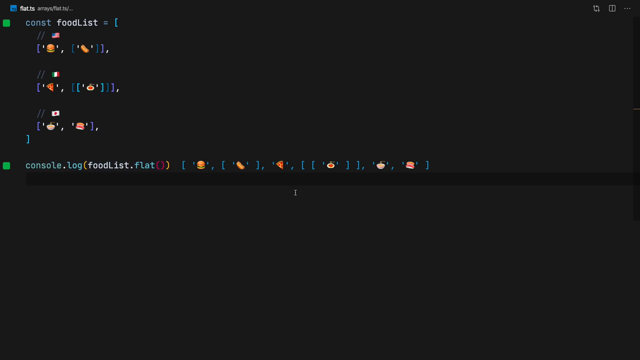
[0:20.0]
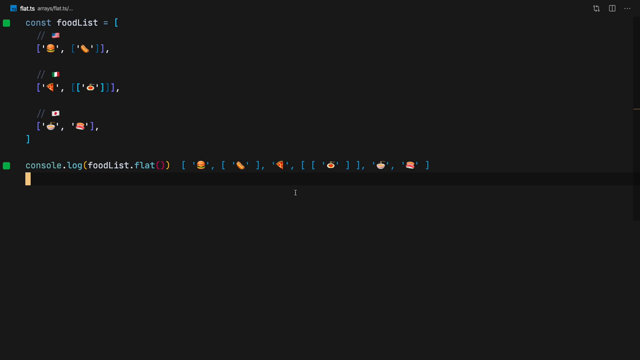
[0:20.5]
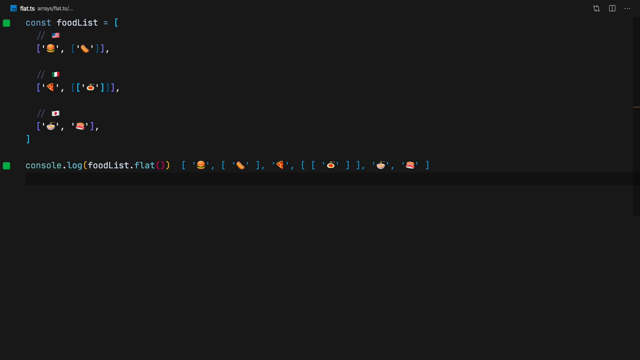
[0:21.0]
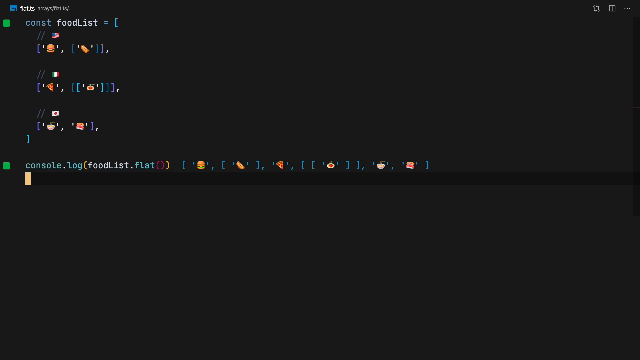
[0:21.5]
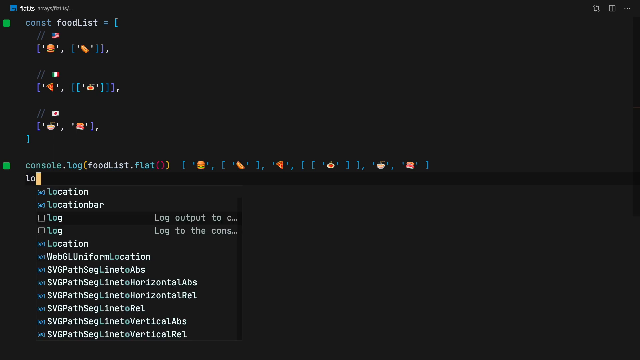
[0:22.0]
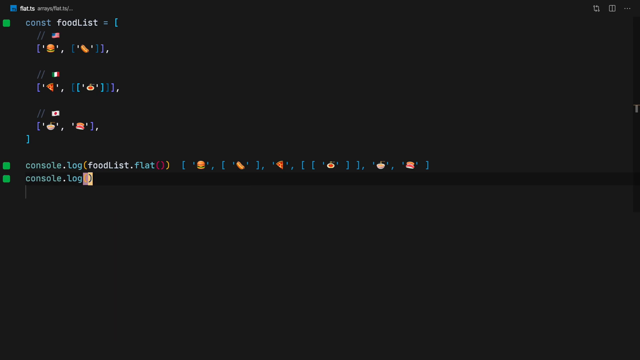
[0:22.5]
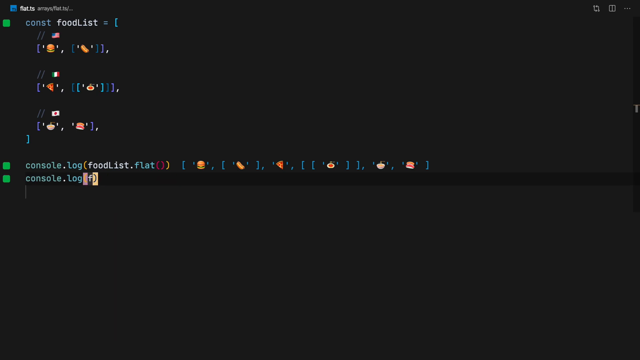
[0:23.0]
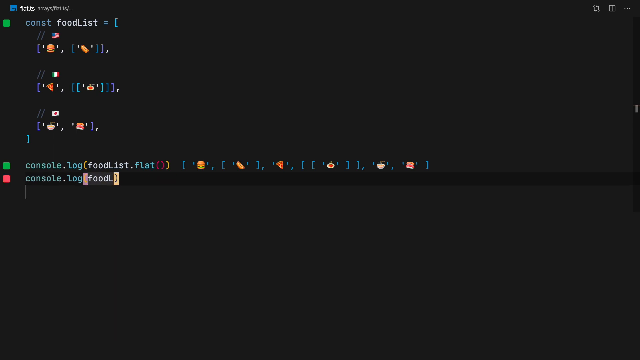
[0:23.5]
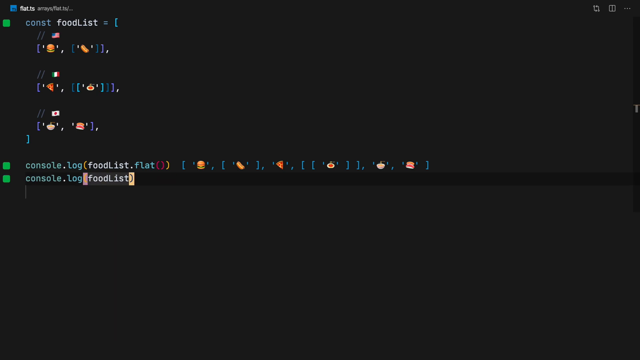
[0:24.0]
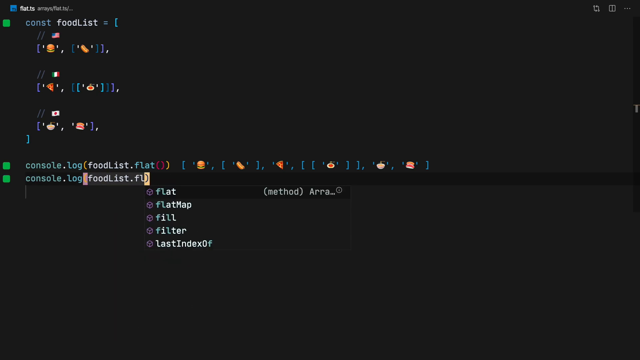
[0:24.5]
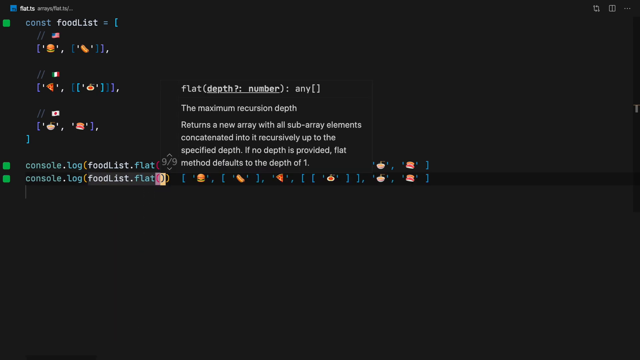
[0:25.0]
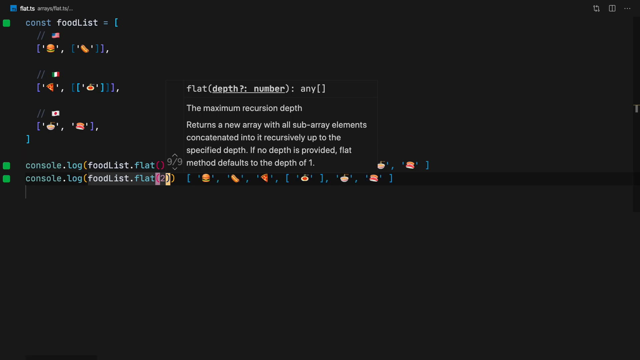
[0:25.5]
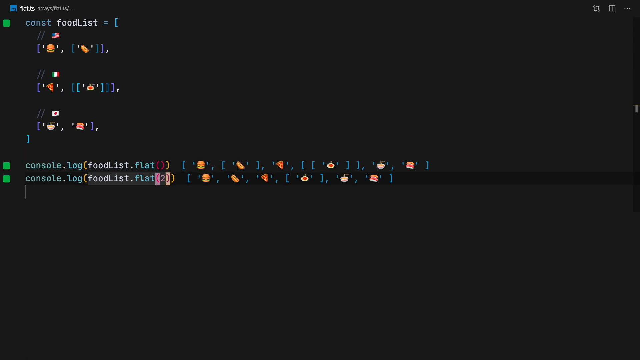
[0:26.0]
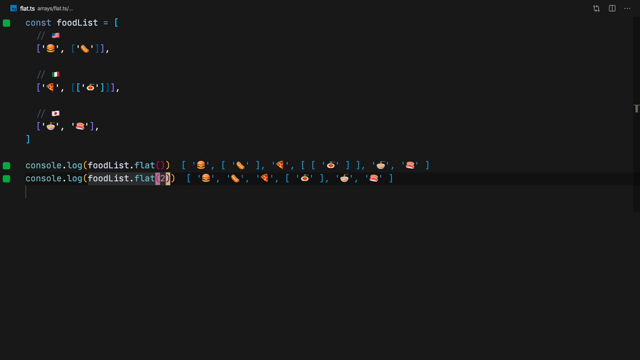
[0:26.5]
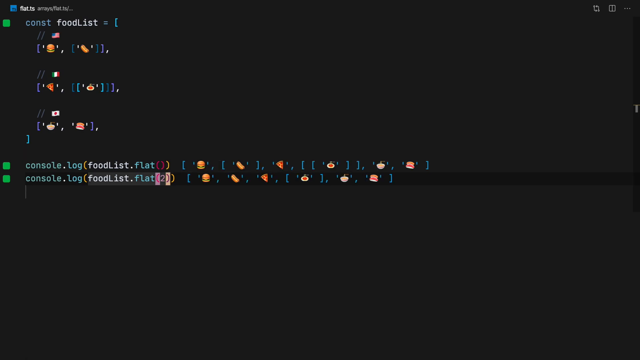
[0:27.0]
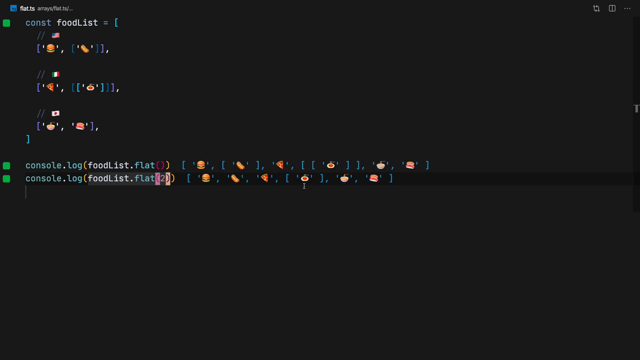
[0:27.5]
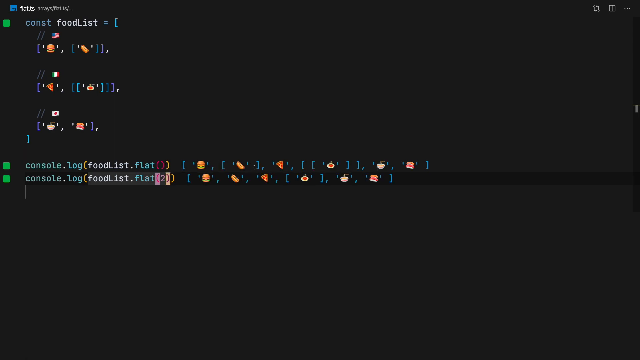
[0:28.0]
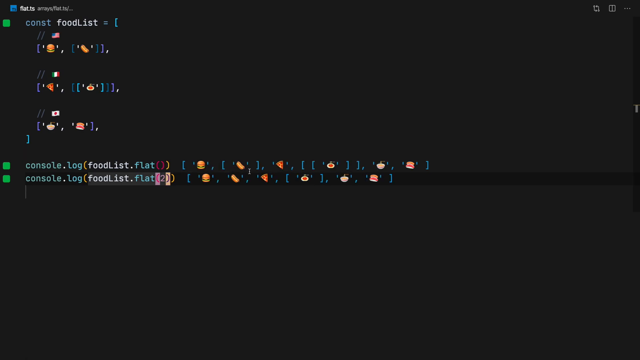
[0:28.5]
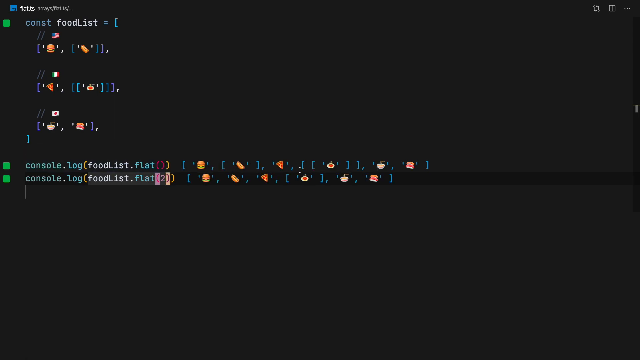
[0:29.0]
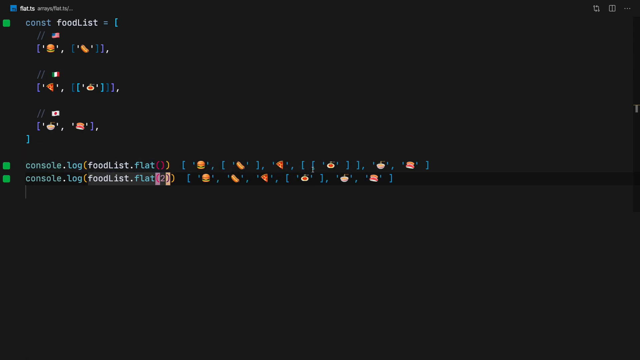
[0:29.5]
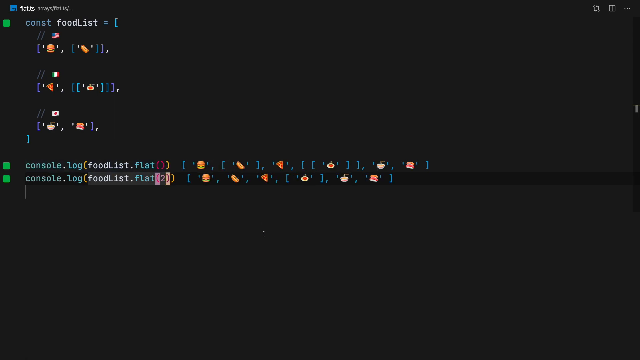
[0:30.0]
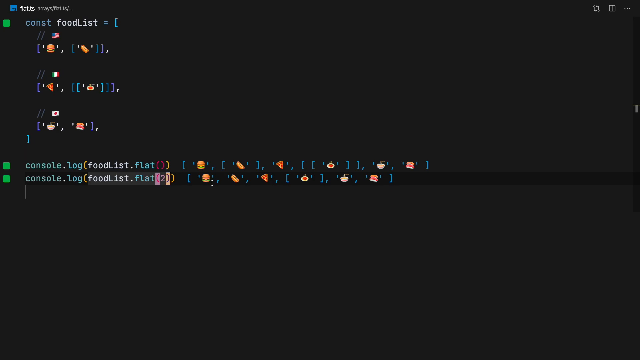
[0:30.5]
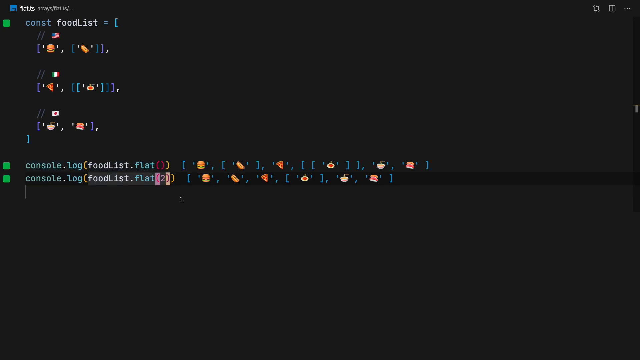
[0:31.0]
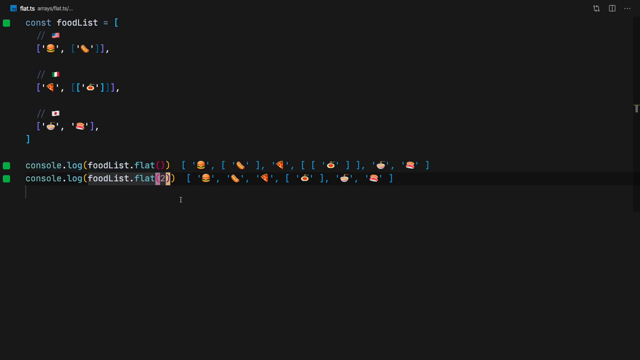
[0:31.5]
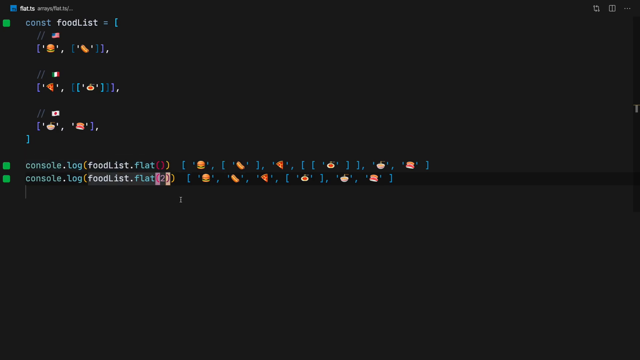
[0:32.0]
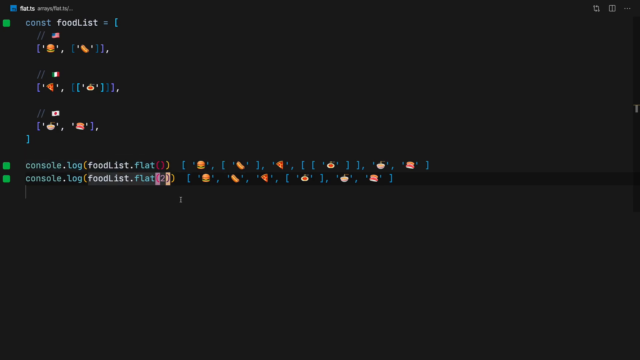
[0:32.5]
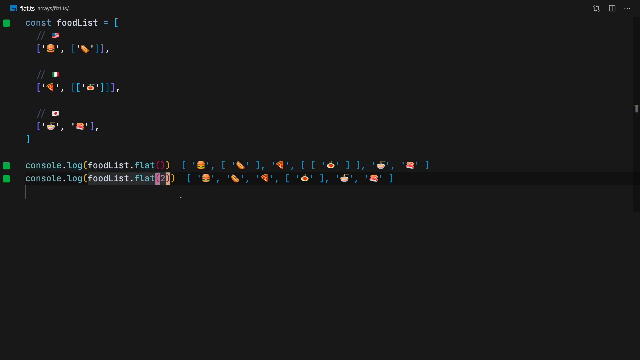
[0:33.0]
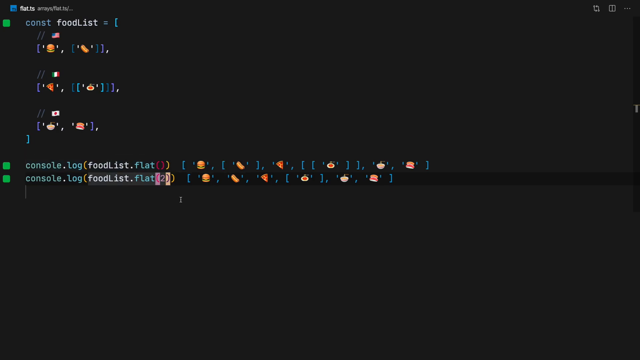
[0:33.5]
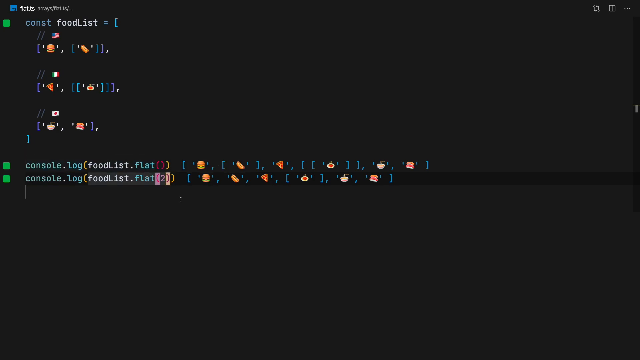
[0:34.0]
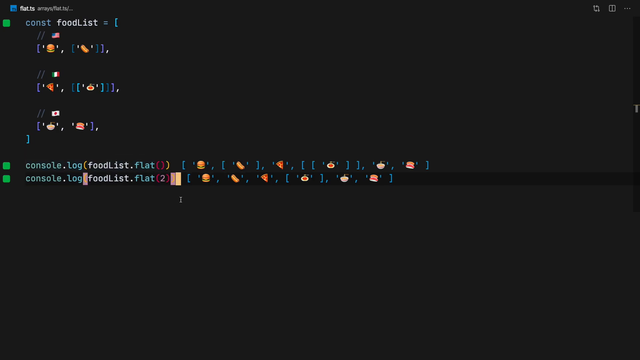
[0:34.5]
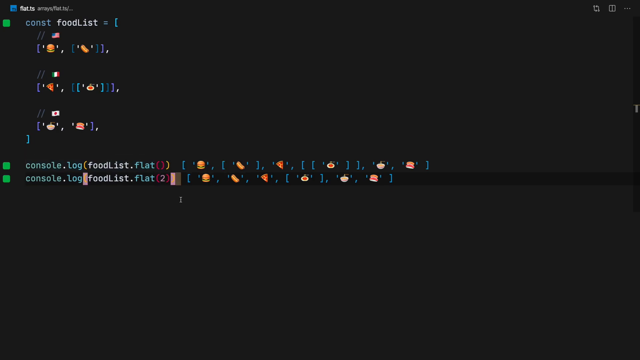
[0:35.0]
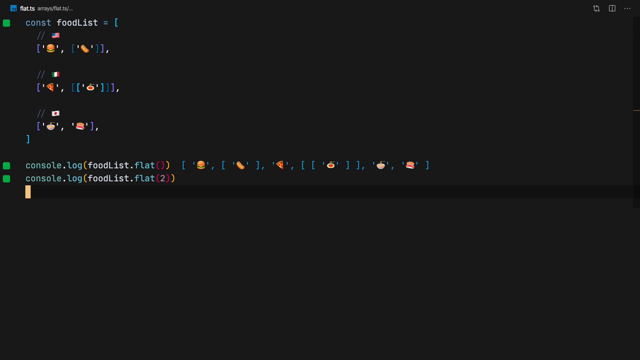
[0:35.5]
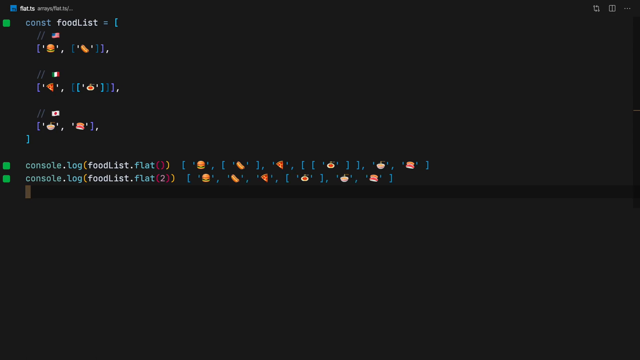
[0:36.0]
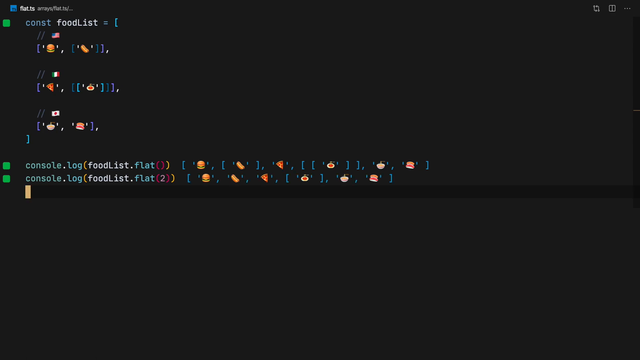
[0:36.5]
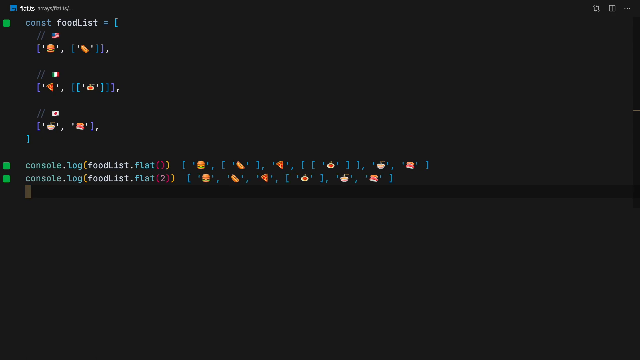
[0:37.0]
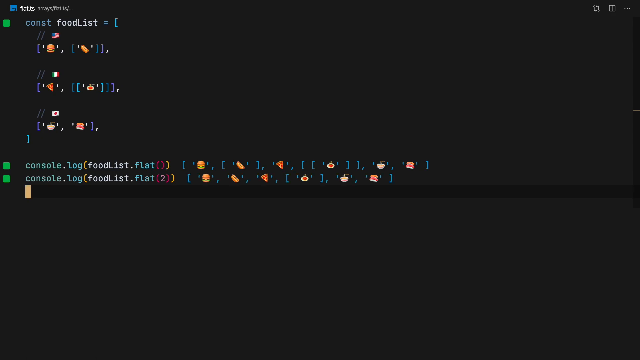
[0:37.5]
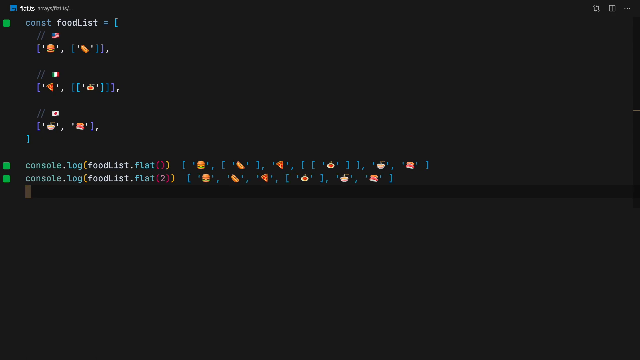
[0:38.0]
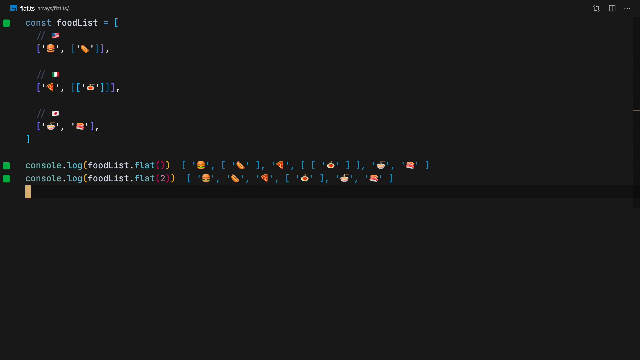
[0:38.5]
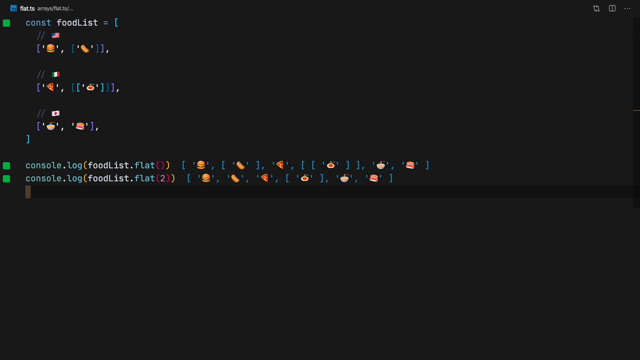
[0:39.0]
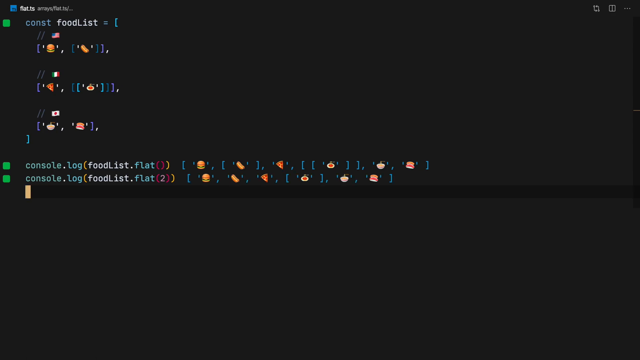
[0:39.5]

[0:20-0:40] The user again types out the function console.logFoodList. They appear to put the same food items in this list as in the first list, and compare one list with the other, moving the mouse cursor between the two lists as if to show the differences. This food list is labeled as food list number two. Its parameters are separated more than those in the first food list, yet the emoji items are in exactly the same order as in the first list. In the second list, the pasta dish appears to be separate on its own, whereas in the first list what appears to be a hot dog and the pasta dish are both isolated.